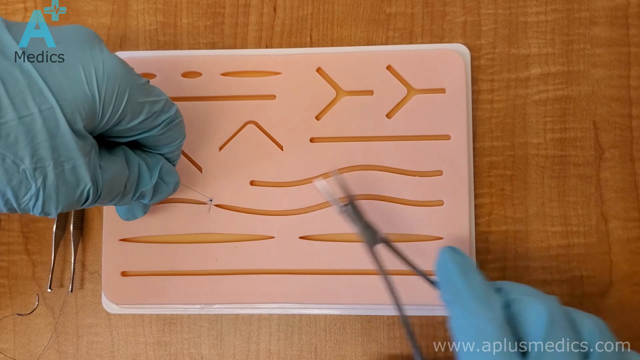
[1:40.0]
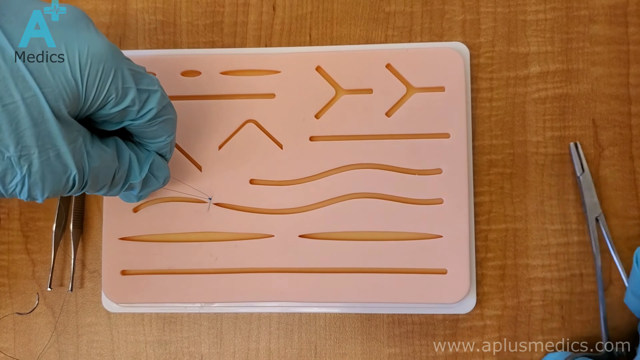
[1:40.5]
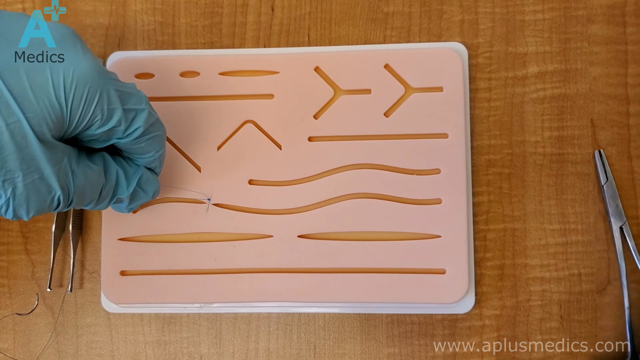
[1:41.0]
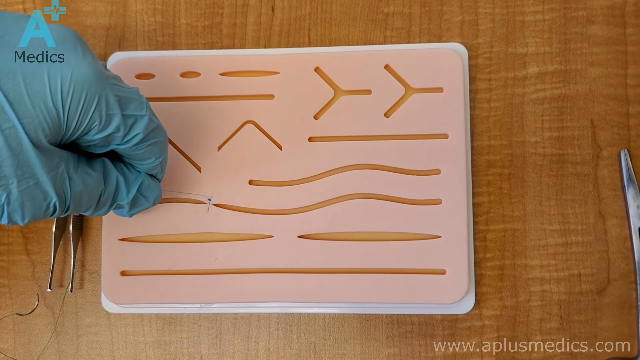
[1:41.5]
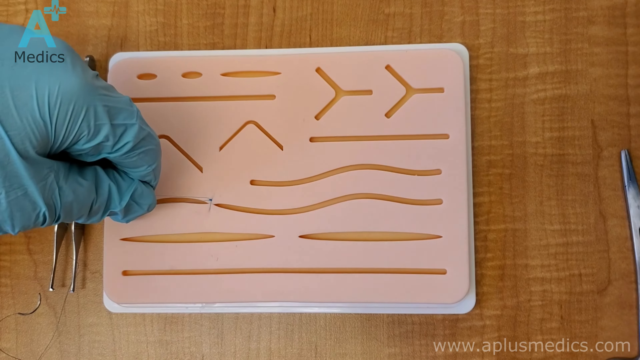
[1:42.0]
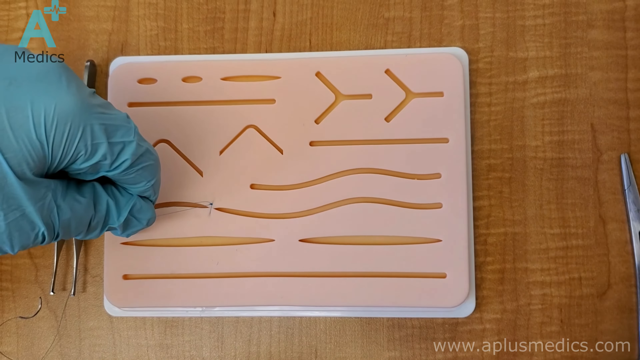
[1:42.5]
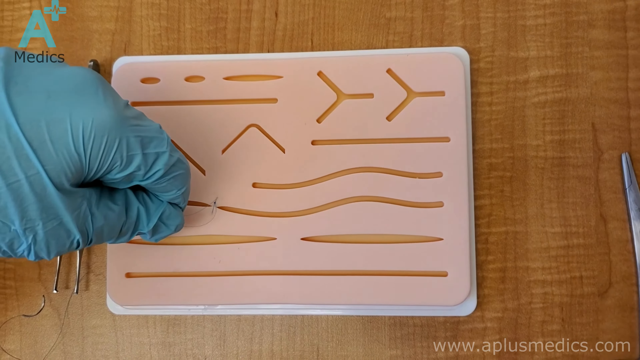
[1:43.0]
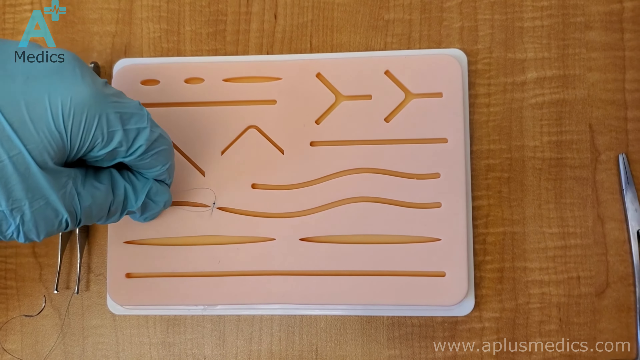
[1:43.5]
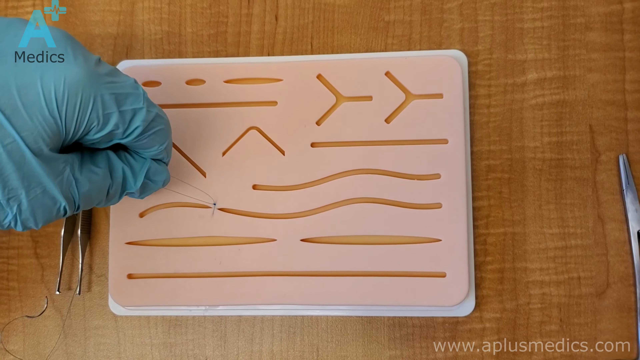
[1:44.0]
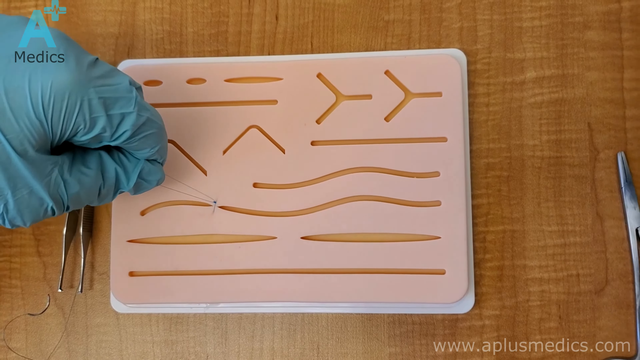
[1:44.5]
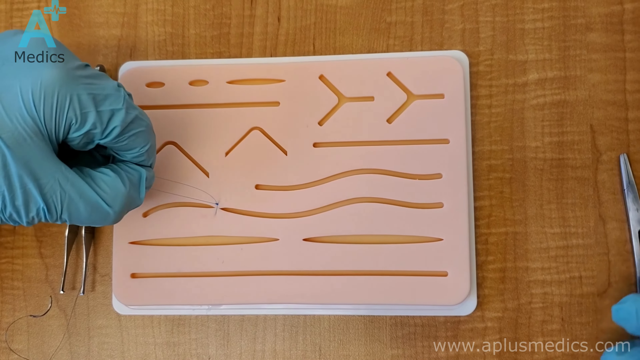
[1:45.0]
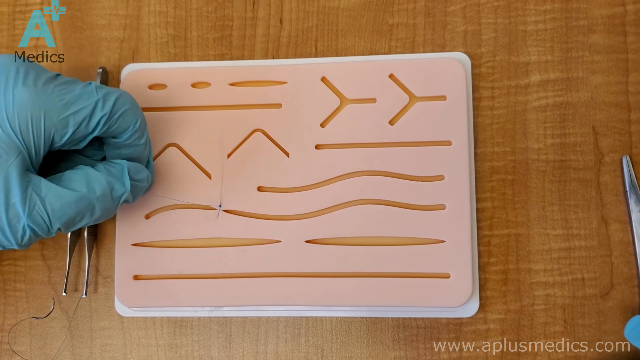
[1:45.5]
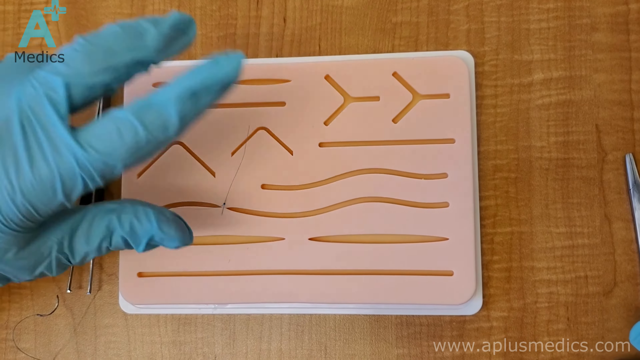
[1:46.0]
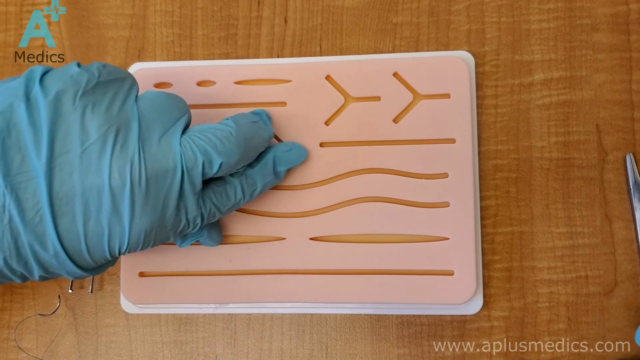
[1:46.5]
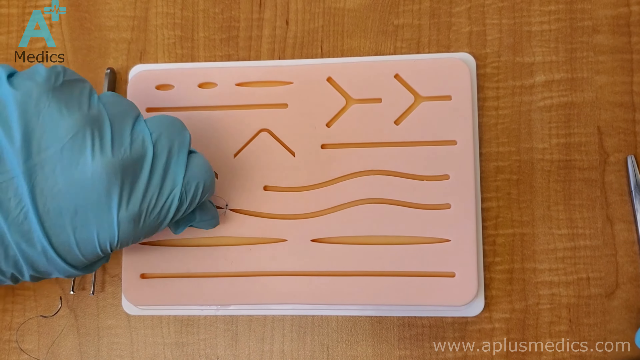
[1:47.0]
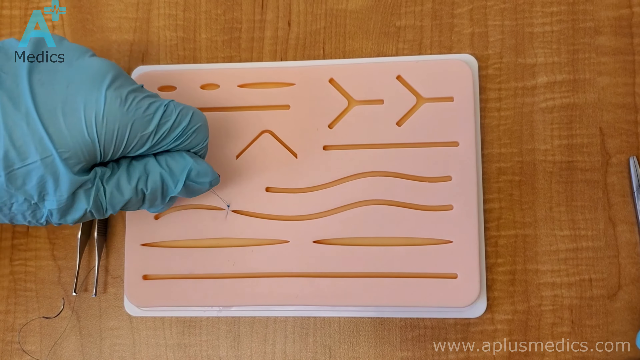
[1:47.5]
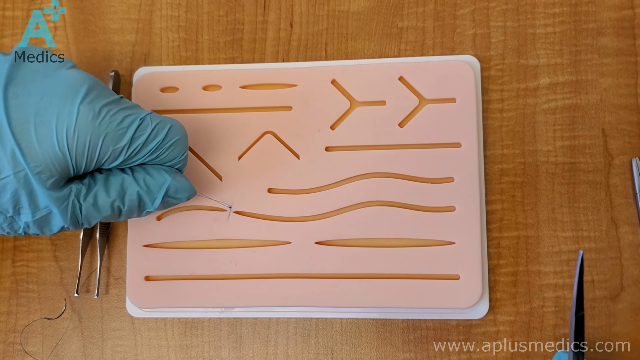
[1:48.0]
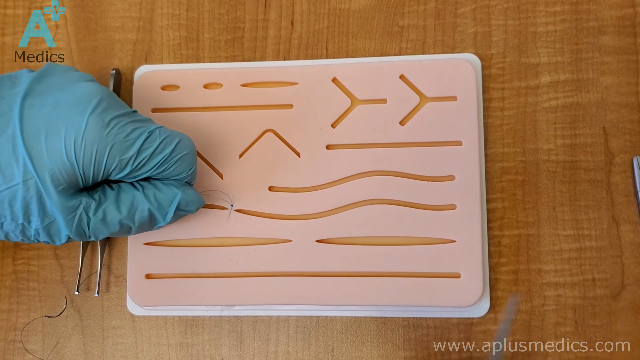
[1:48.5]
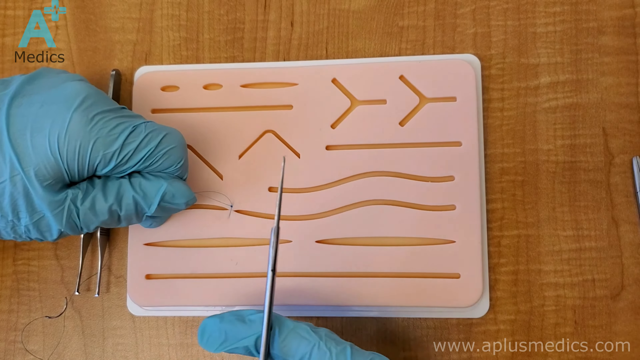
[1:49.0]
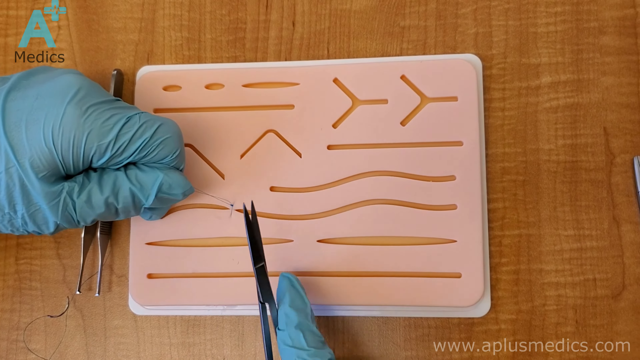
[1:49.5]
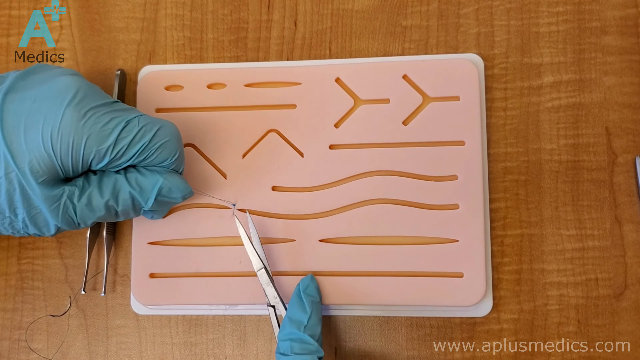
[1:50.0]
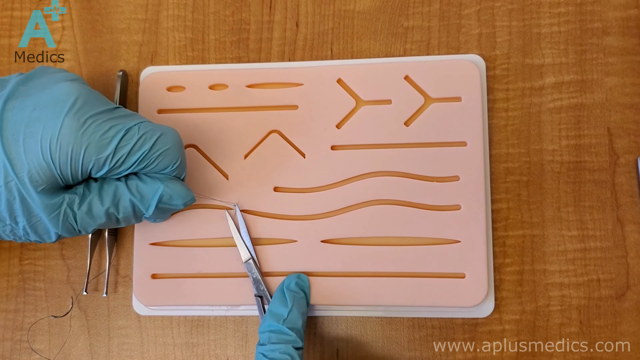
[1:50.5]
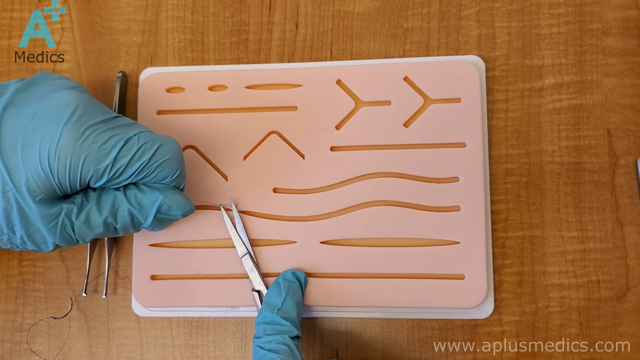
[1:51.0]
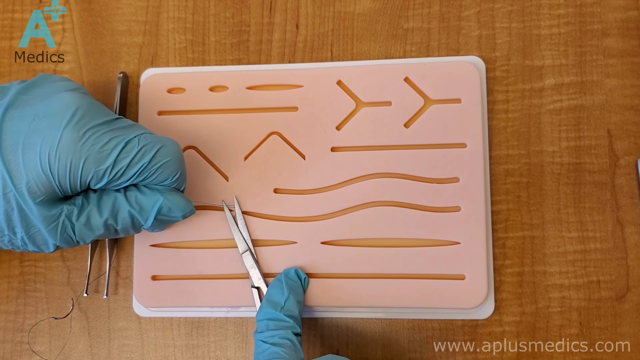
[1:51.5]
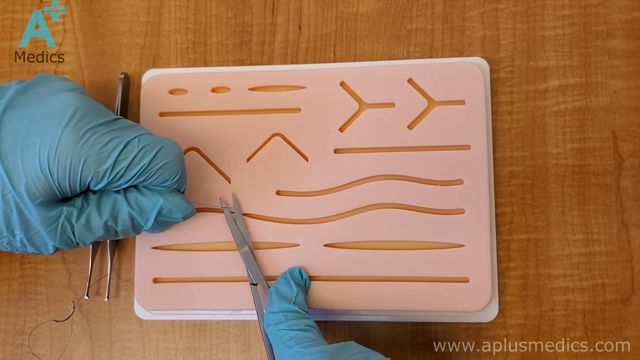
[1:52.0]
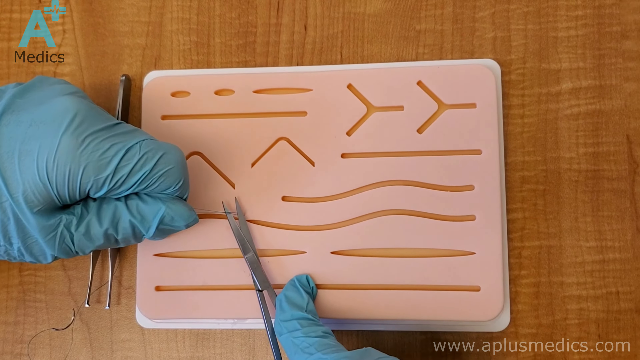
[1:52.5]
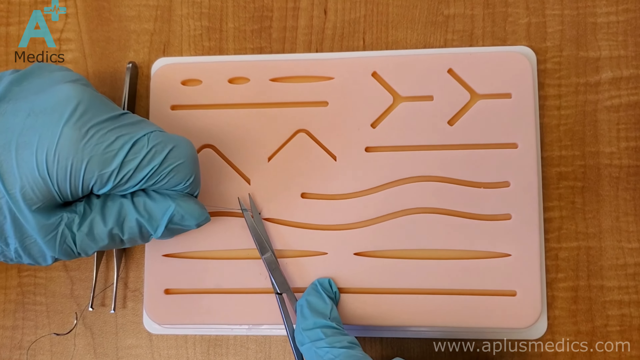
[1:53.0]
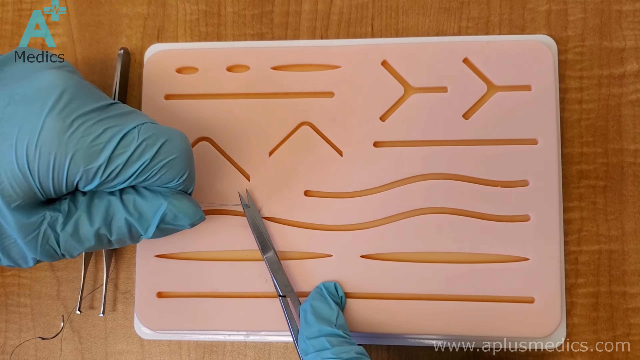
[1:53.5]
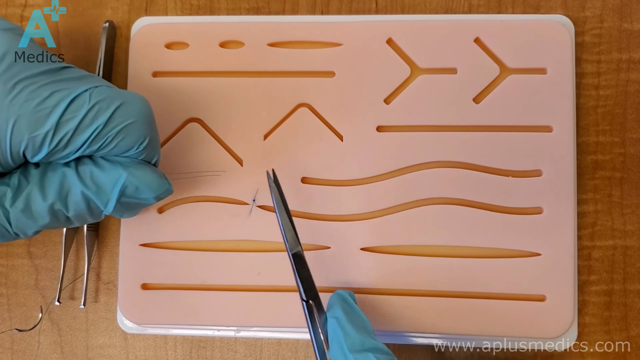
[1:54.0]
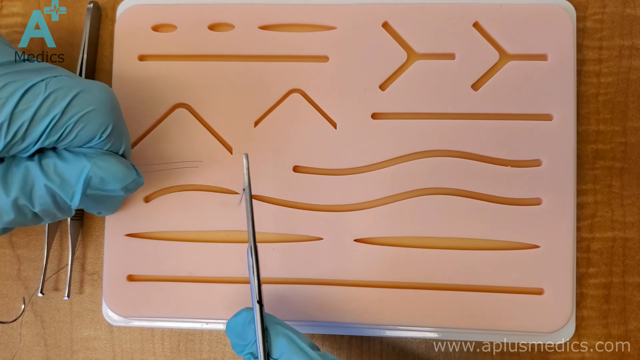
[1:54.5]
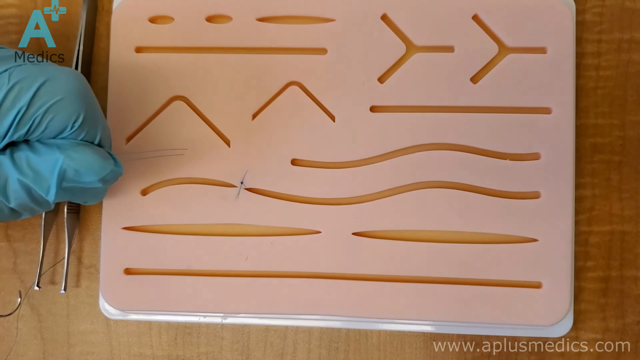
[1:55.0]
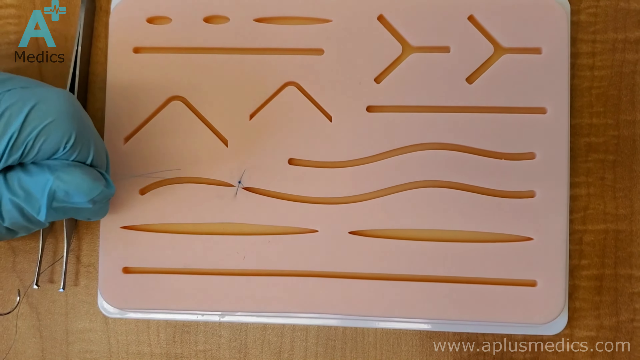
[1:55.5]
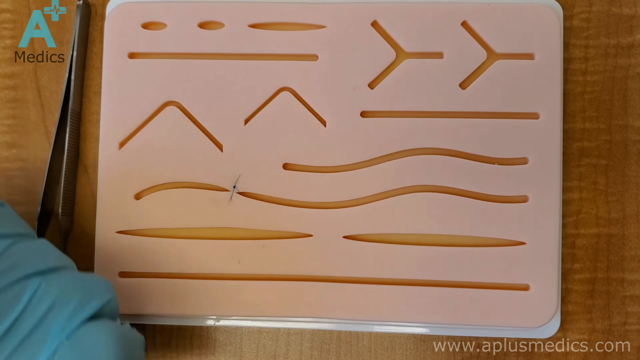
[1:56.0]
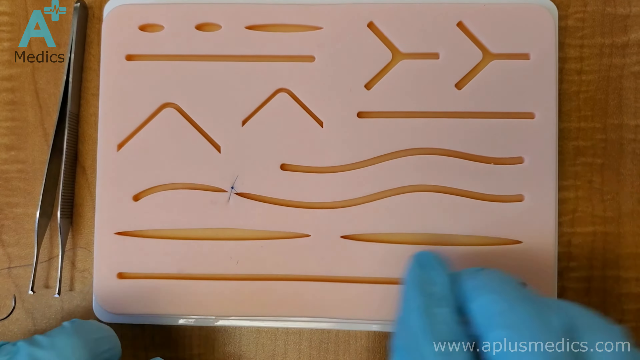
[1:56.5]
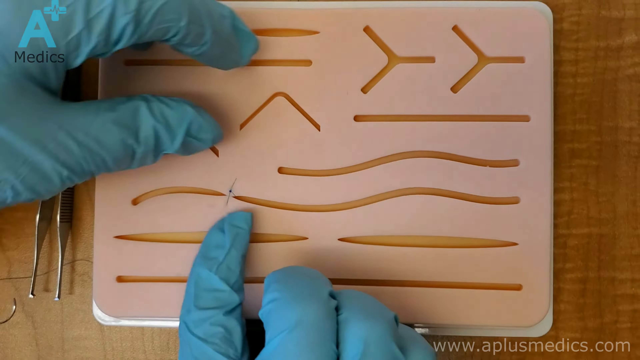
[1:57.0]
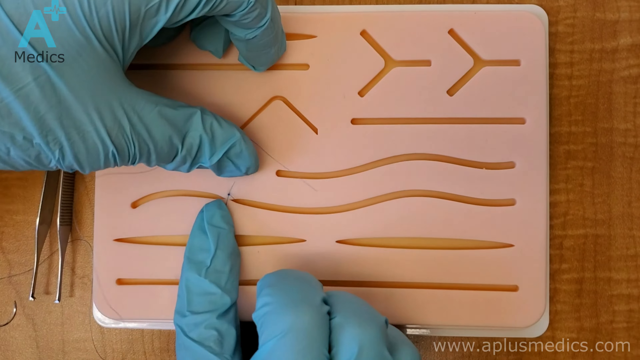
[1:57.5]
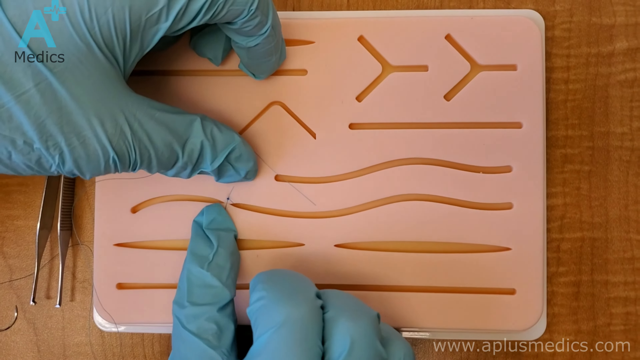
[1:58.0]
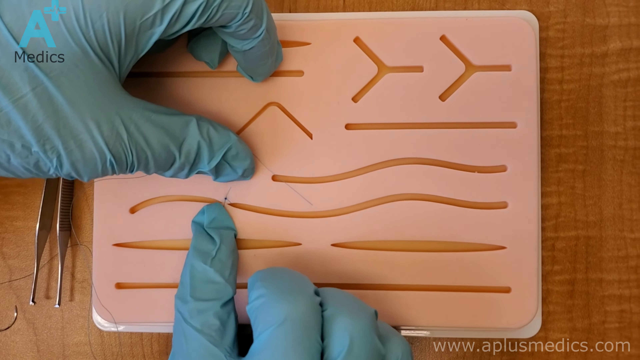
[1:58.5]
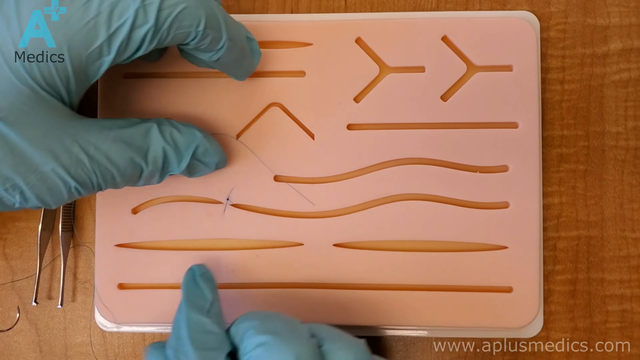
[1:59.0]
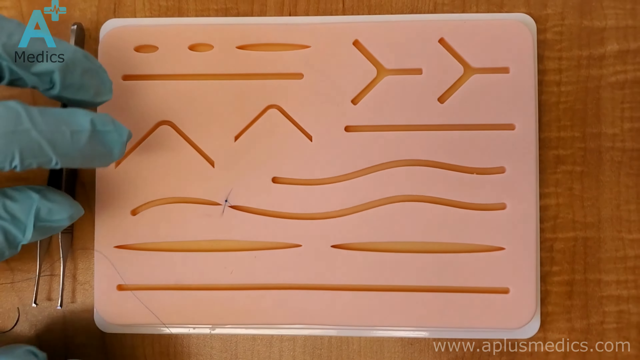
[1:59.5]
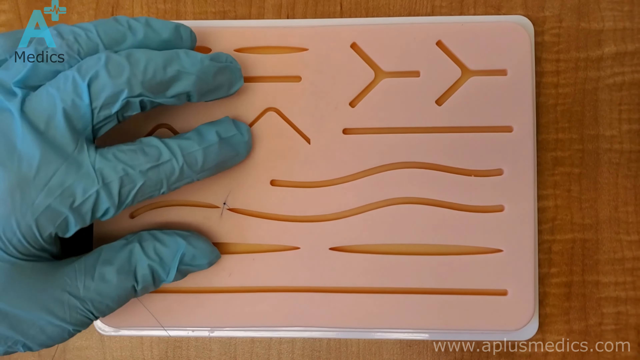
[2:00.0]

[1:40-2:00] The person wearing blue-turquoise gloves keeps working on the stitch, holding its ends in the left hand to make sure it is tight and secure. They then pick up the scissors in the right hand and cut off the excess thread, so just a small stitch remains. On the foam board, part of the carved-out area is taut and pulled together, with no open groove there anymore. The person holds each end of the stitch with the thumbs and pulls the ends a little more to make sure the stitch is tight and secure. Afterward, only the left hand is on the board, and the right hand is no longer in the picture at all. "A+ Medics" is still in the upper left-hand corner of the screen, and the person doing the stitch work is never seen, only the hand.